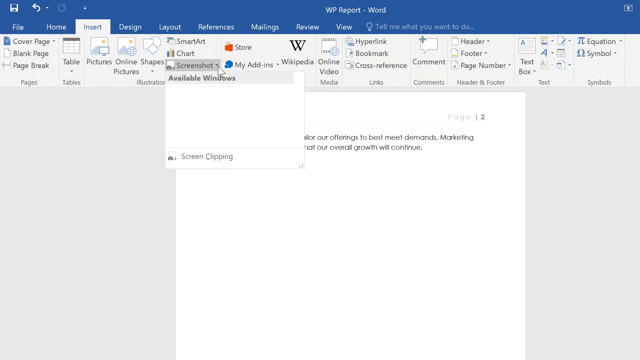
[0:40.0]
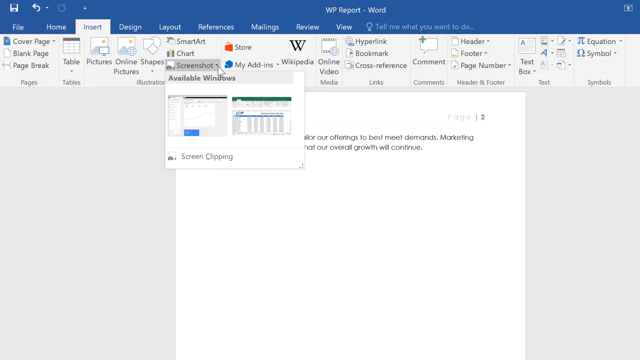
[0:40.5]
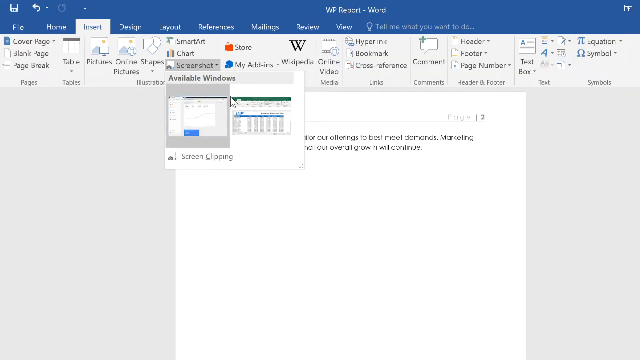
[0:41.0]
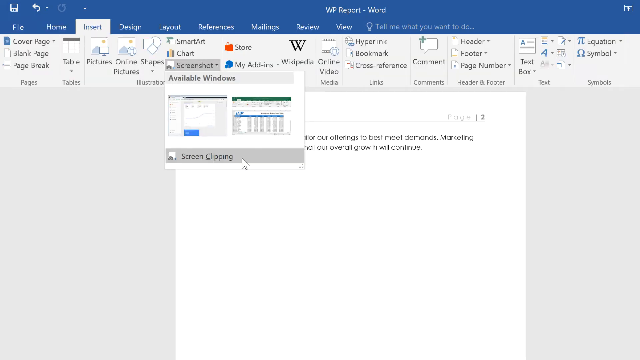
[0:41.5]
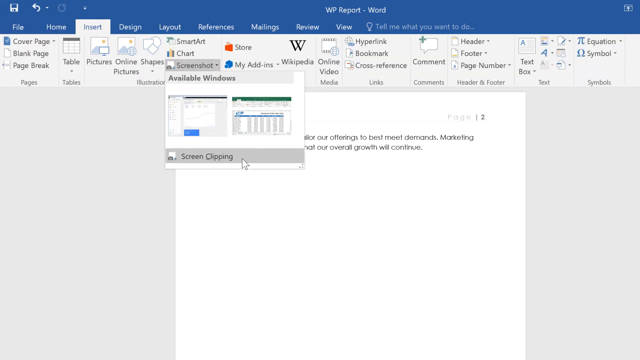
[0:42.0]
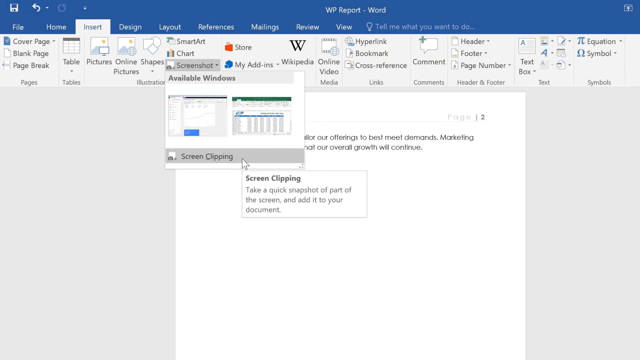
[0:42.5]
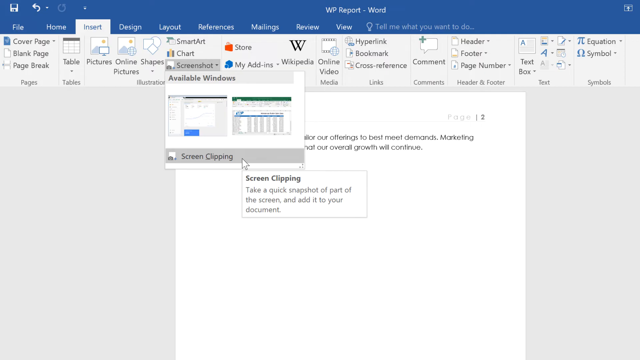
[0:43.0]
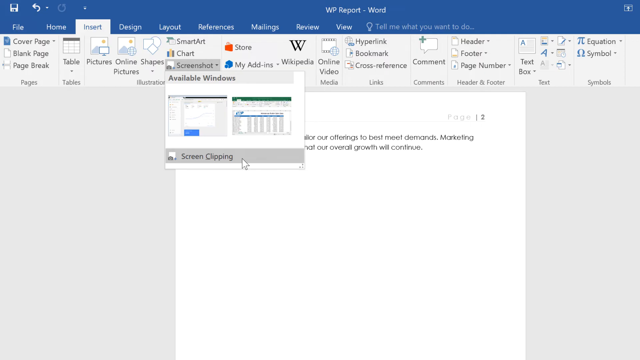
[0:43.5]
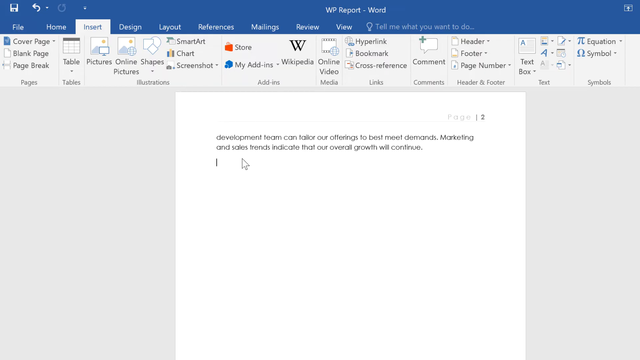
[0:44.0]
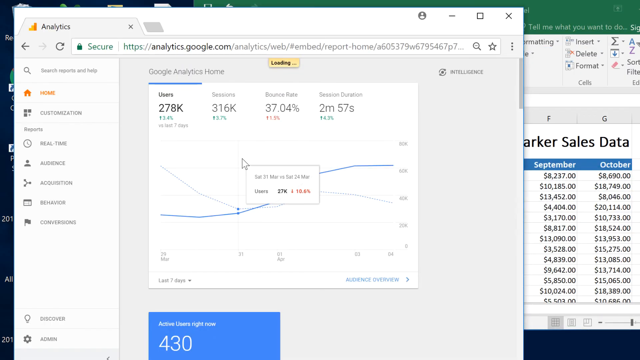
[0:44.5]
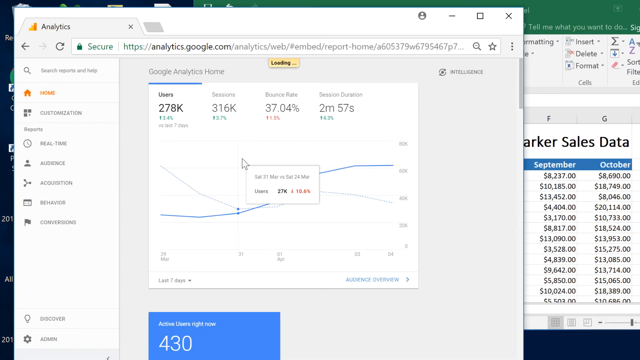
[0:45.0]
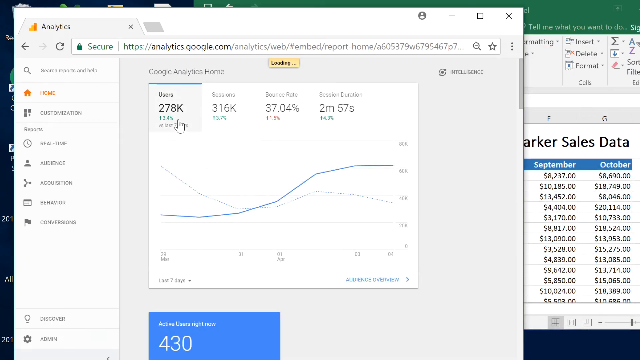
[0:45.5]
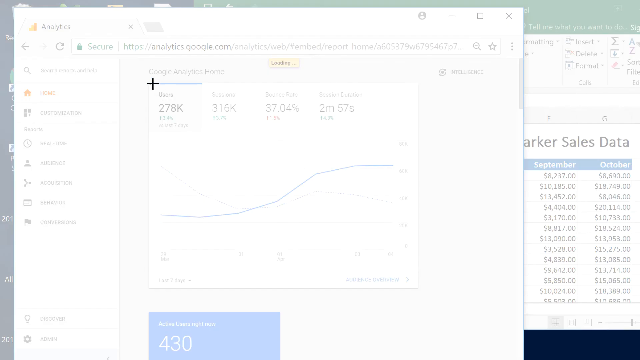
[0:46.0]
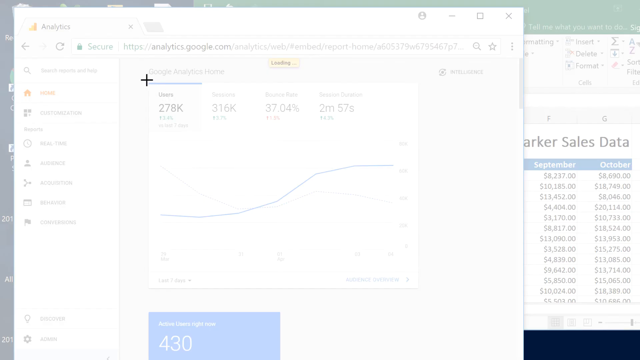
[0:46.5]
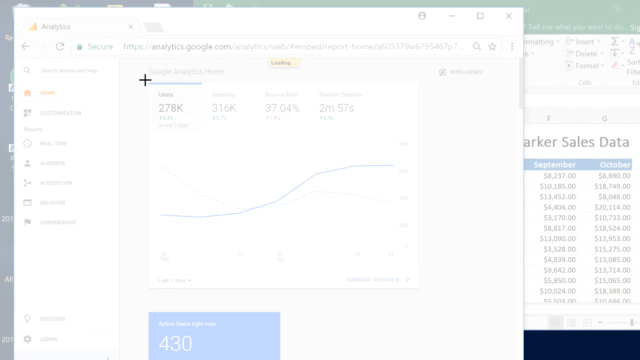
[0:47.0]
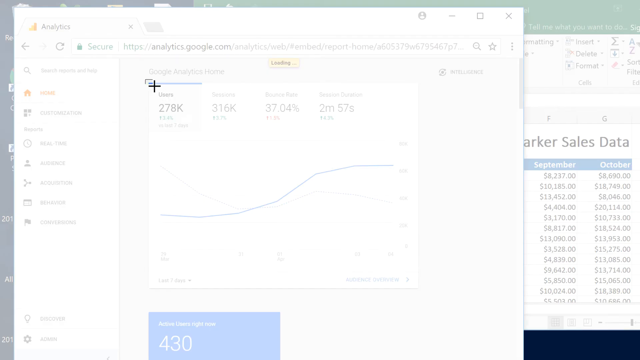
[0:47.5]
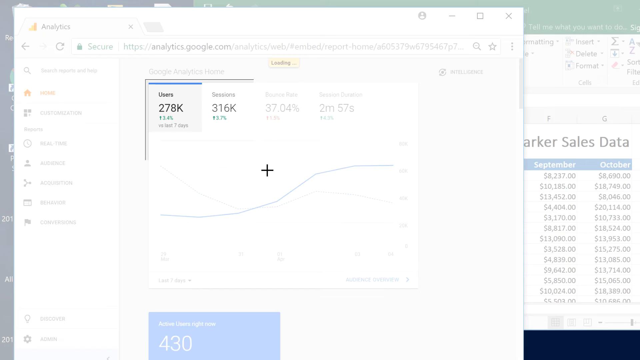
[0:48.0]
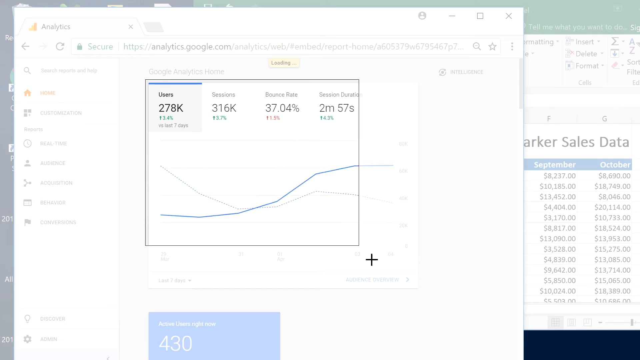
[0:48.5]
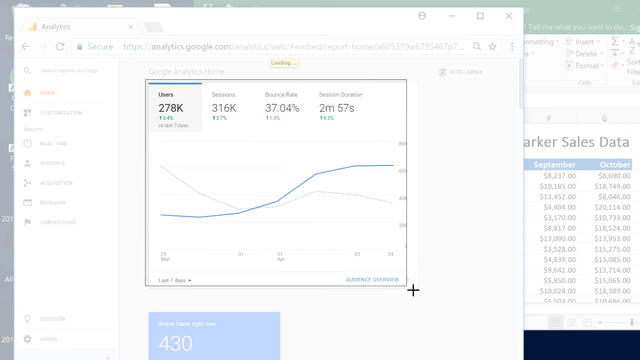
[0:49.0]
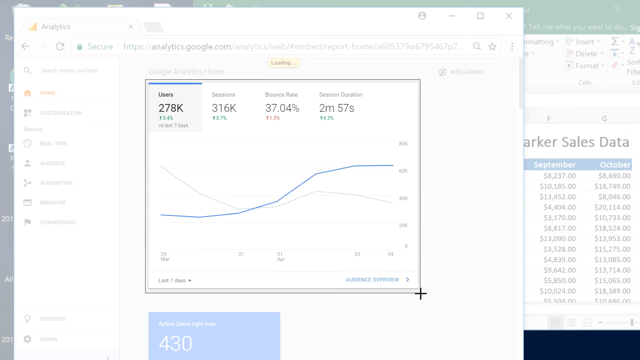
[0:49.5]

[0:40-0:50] The user goes into the available options and into screen clipping, then goes to another screen and highlights what they want to add, making a screen clipping of it.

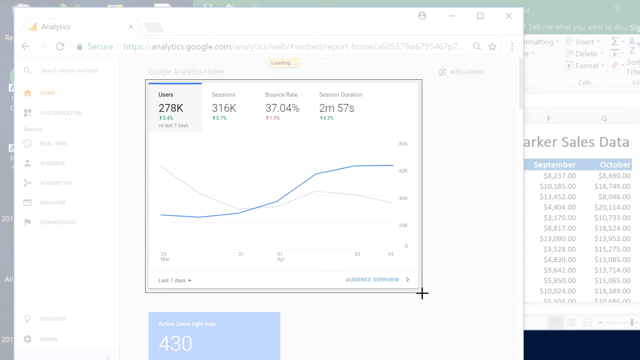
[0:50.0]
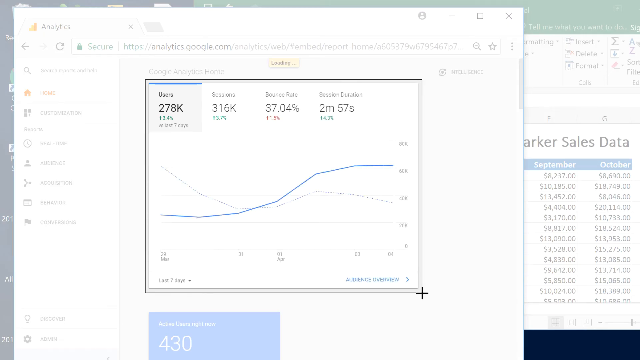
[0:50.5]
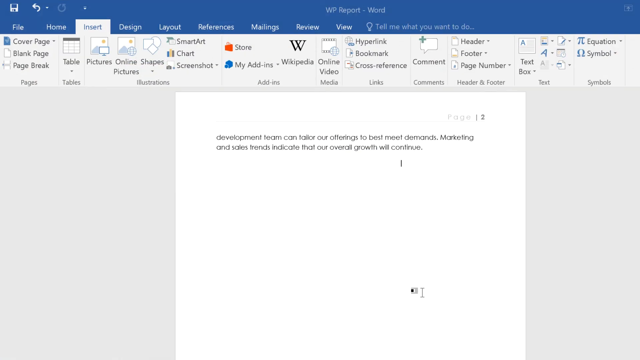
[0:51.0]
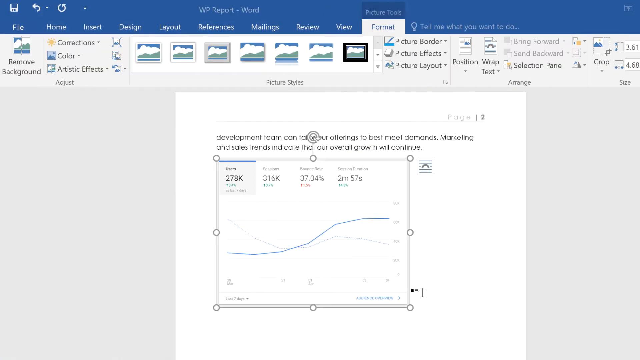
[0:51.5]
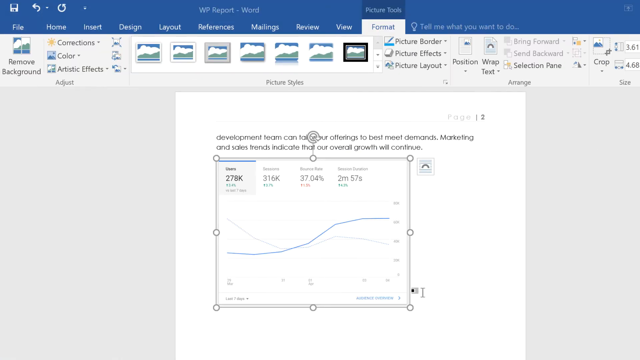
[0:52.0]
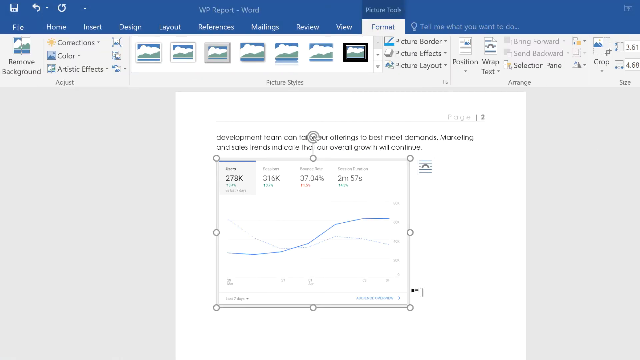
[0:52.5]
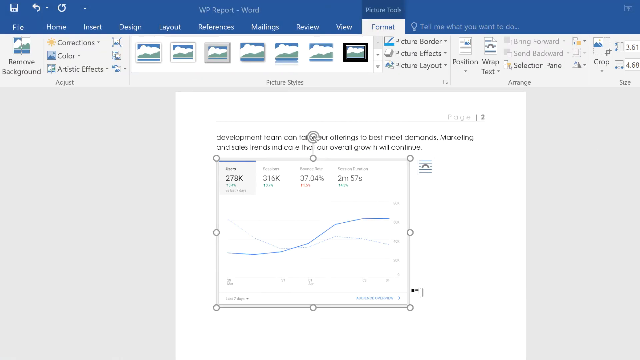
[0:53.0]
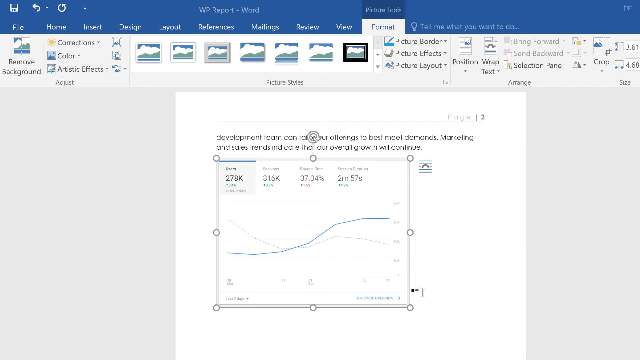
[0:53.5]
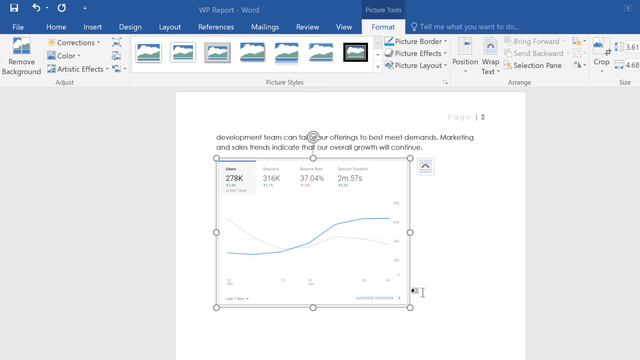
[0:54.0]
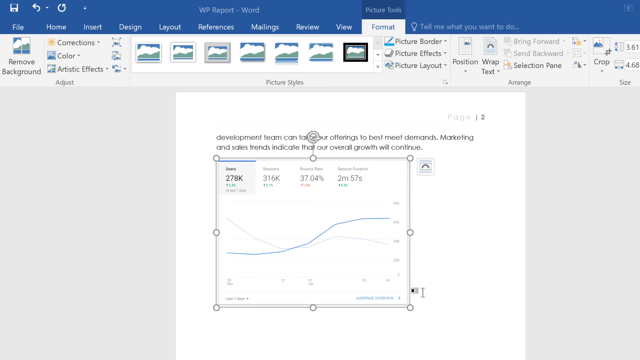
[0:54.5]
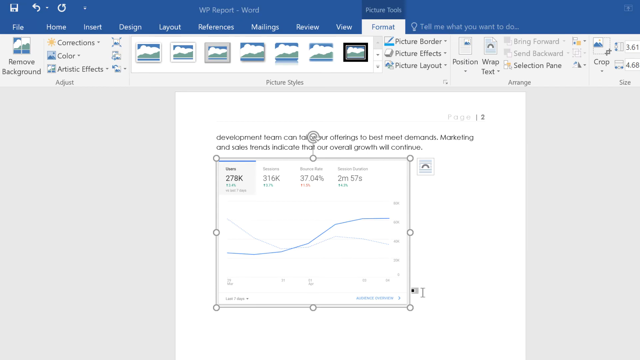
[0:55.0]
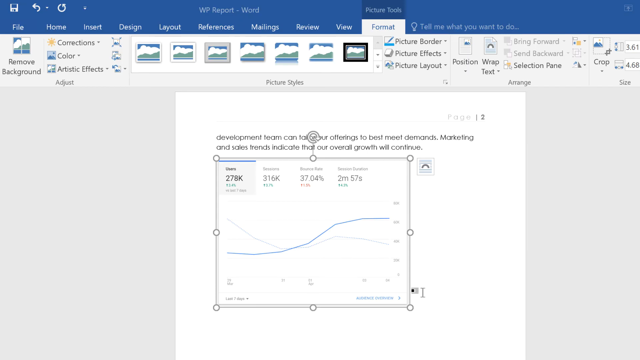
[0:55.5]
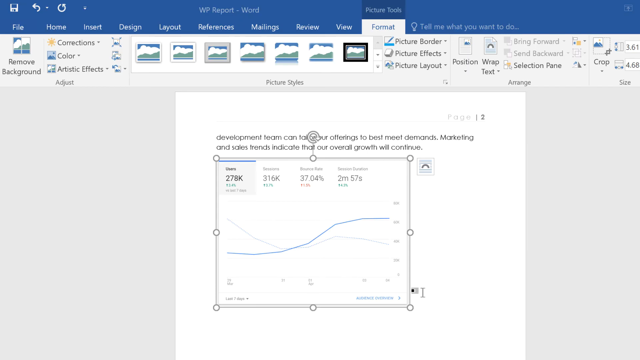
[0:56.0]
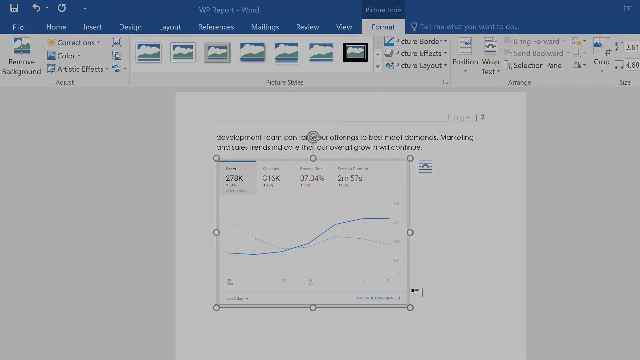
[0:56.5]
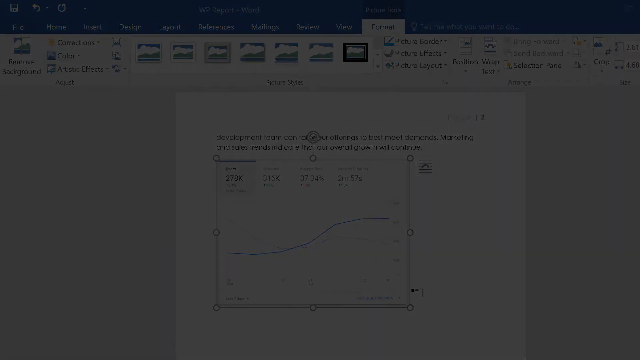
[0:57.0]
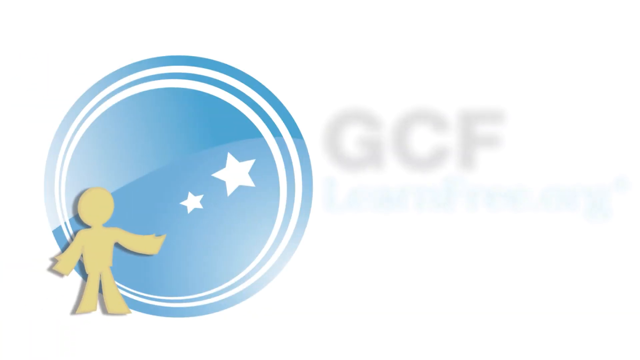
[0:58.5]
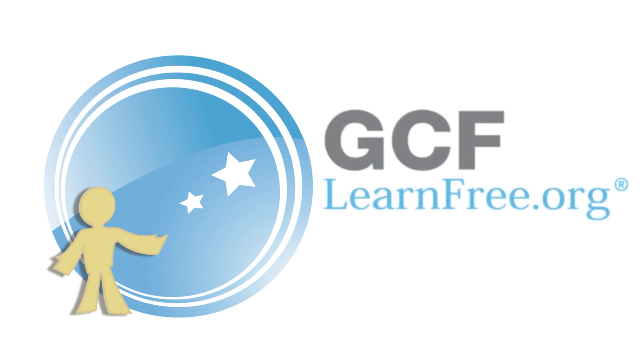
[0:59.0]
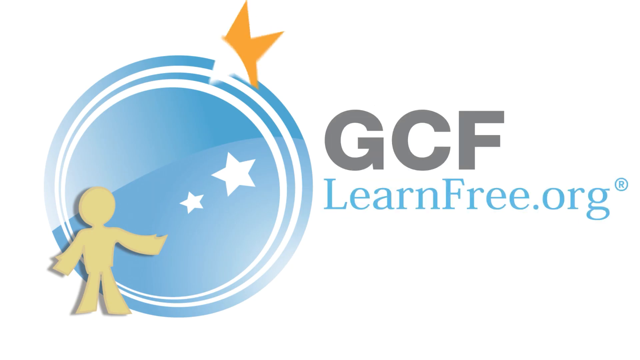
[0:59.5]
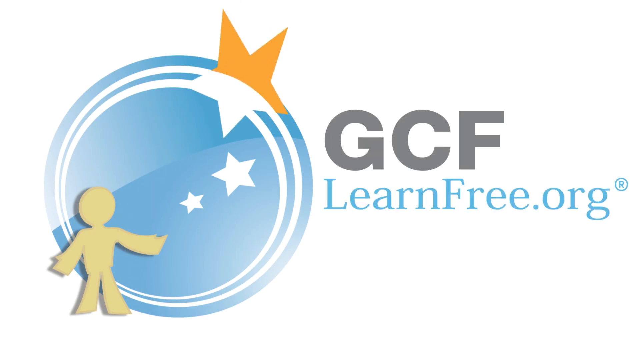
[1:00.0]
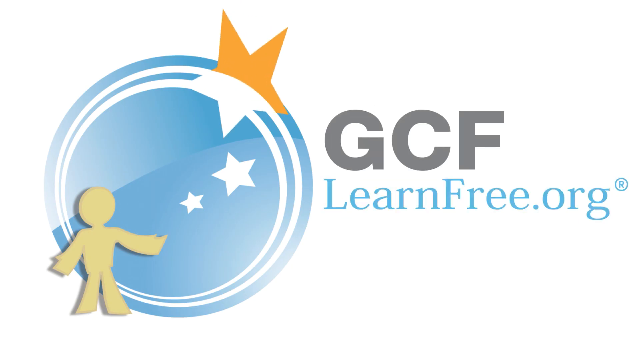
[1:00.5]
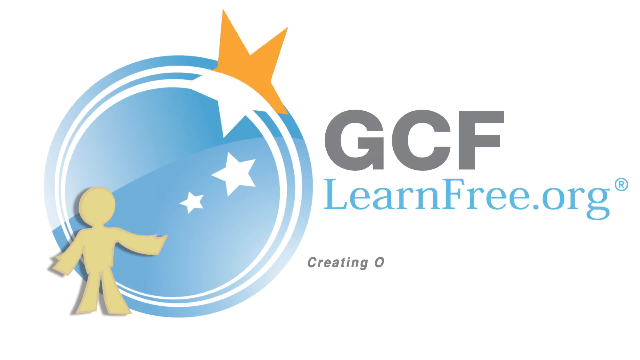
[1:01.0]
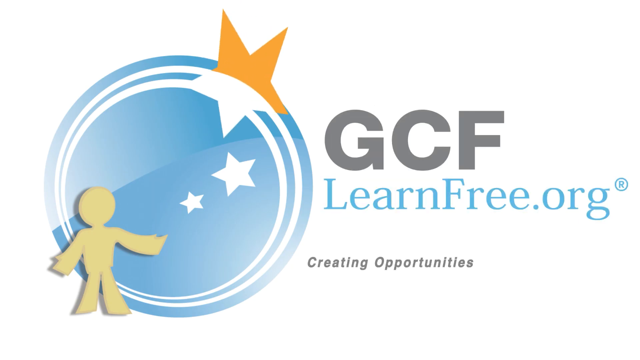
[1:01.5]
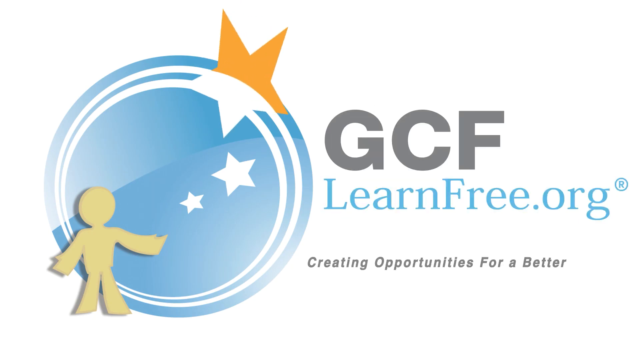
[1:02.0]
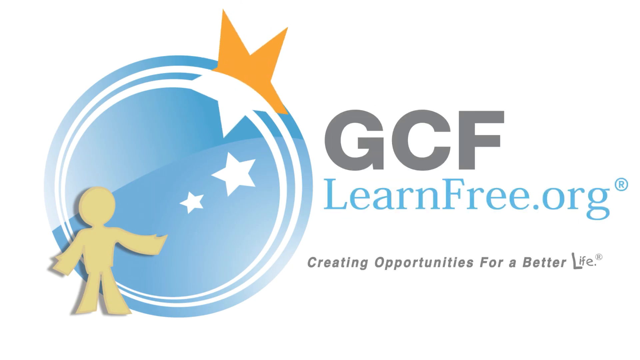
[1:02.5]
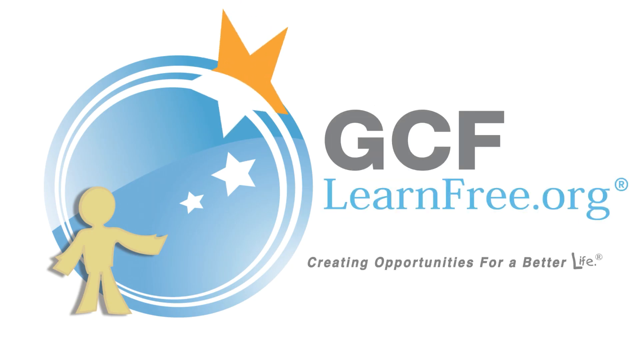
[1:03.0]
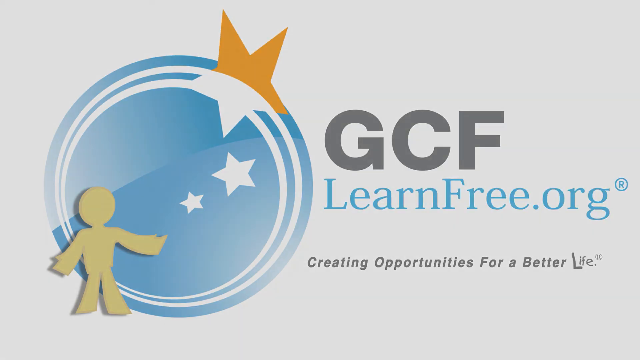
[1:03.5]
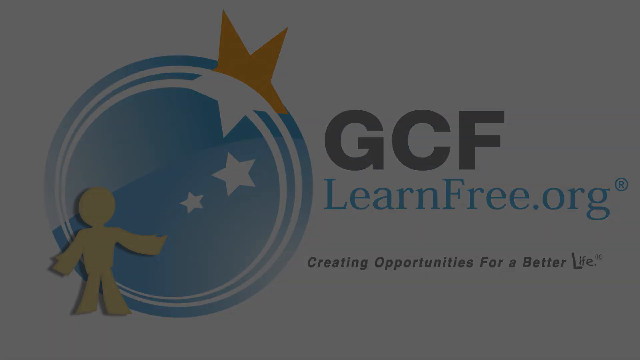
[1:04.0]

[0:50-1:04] Text appears reading "jcflearnfree.org creating opportunities for a better life", apparently indicating who made the video. The video then shows again going to Insert and to the Screenshot drop-down menu, inserting a screenshot, and making your own screenshot and adding it to the document. Then it goes to jcflearnfree.org.